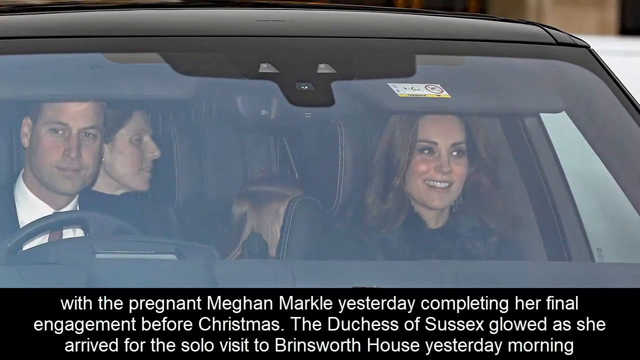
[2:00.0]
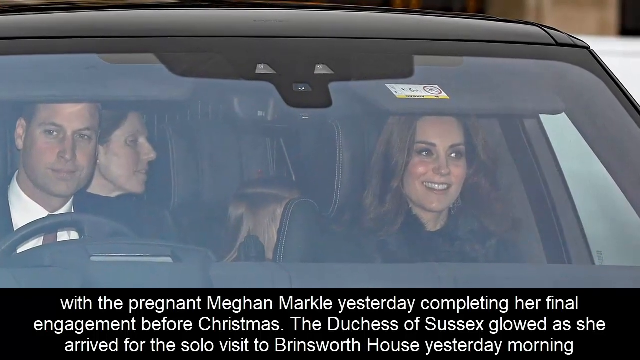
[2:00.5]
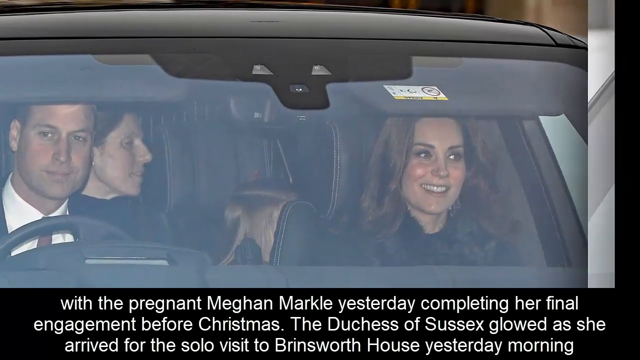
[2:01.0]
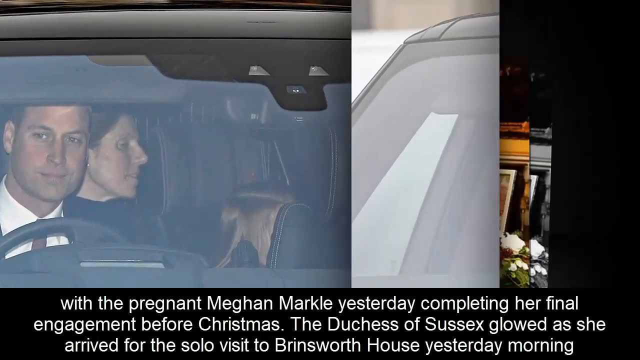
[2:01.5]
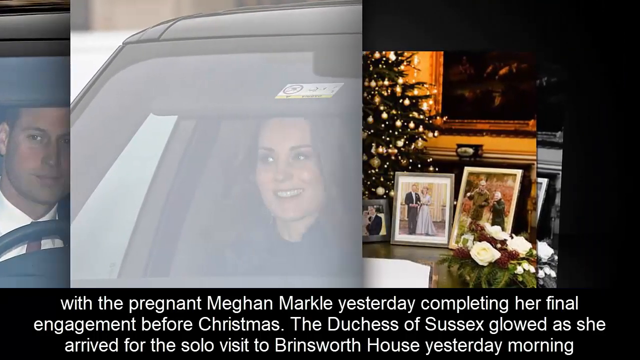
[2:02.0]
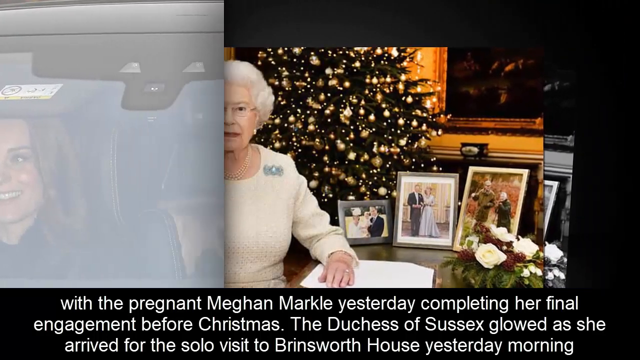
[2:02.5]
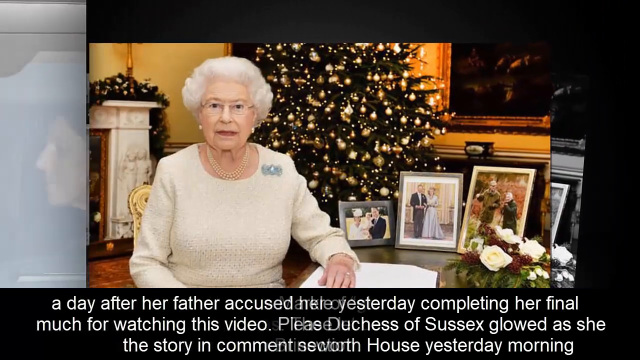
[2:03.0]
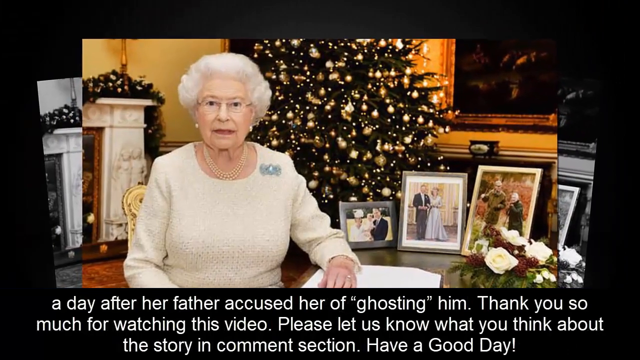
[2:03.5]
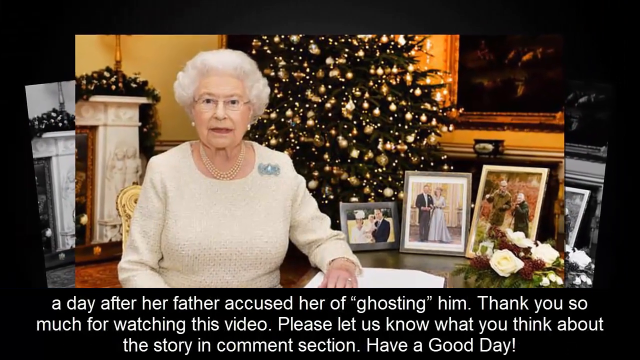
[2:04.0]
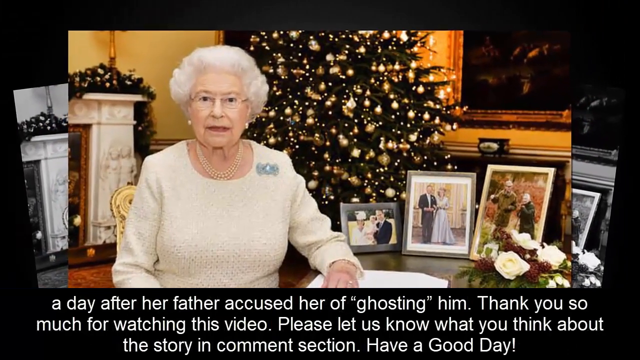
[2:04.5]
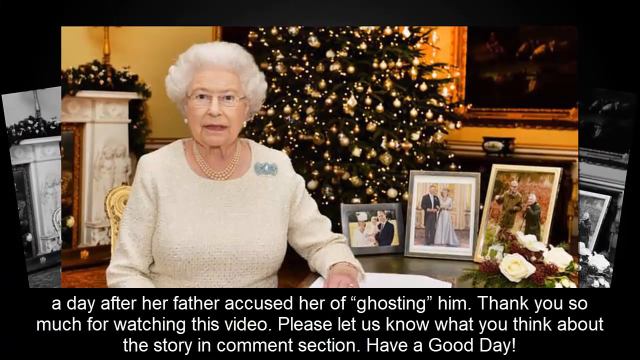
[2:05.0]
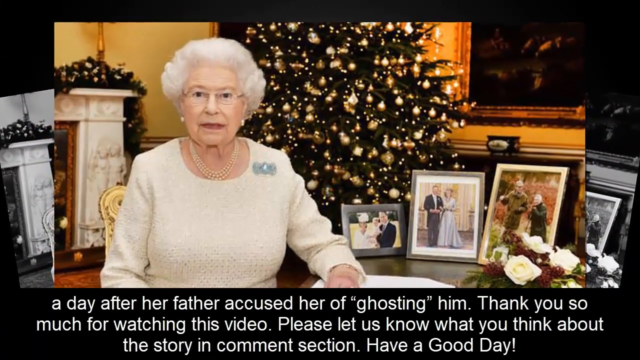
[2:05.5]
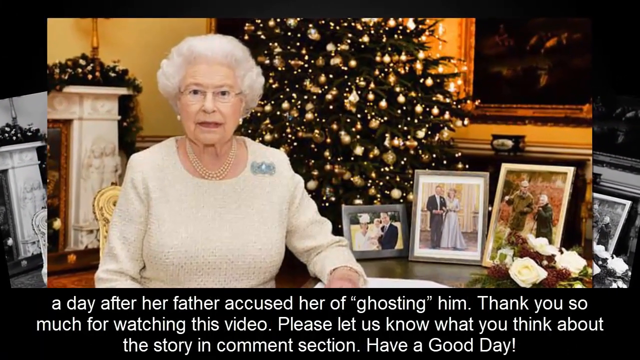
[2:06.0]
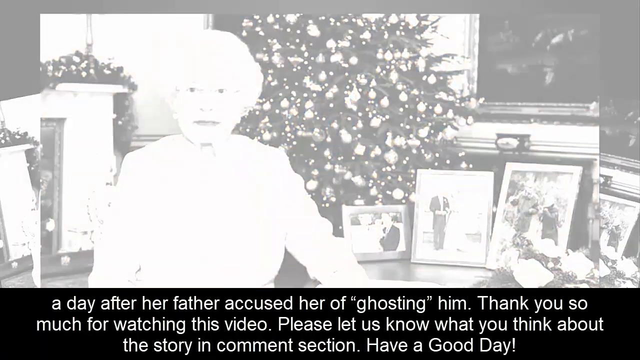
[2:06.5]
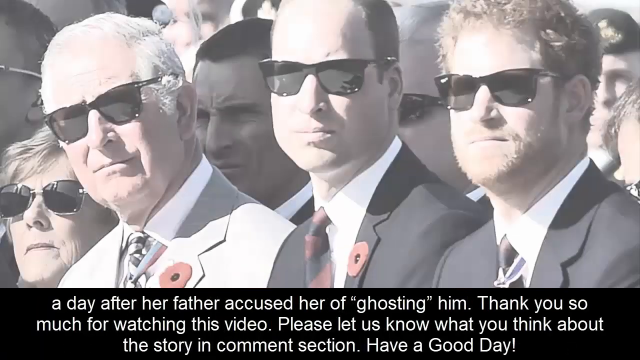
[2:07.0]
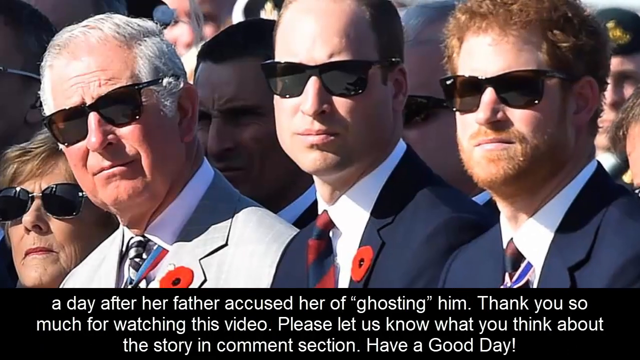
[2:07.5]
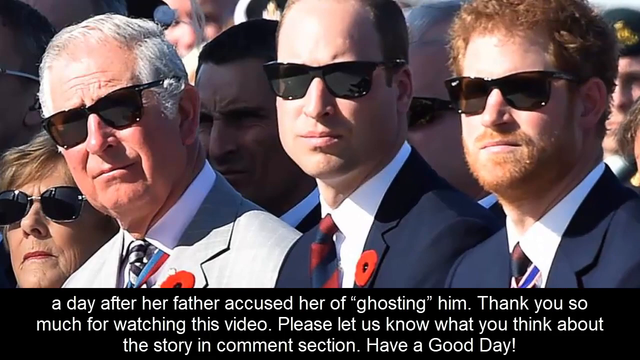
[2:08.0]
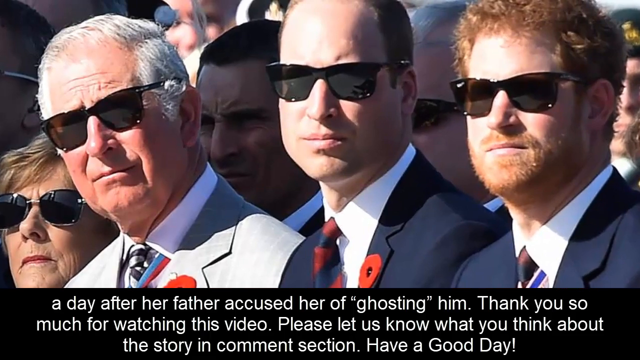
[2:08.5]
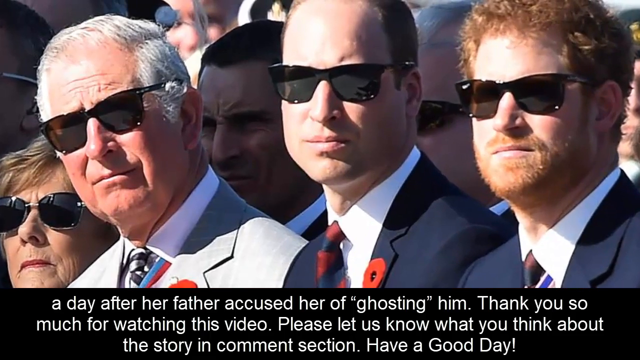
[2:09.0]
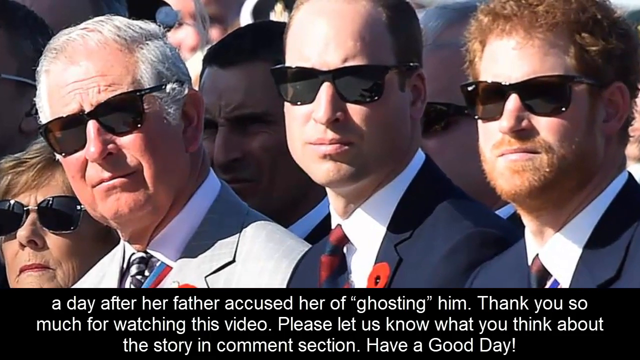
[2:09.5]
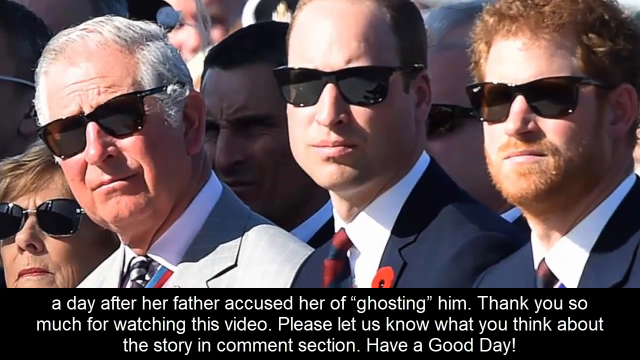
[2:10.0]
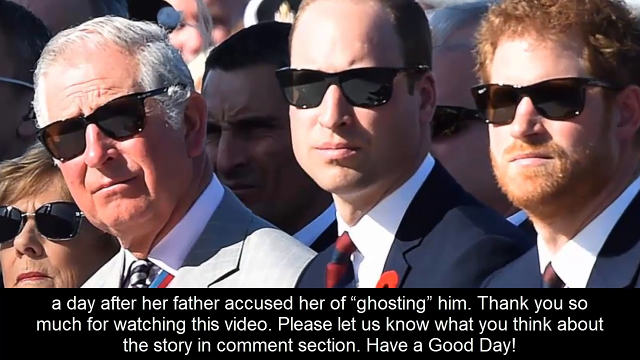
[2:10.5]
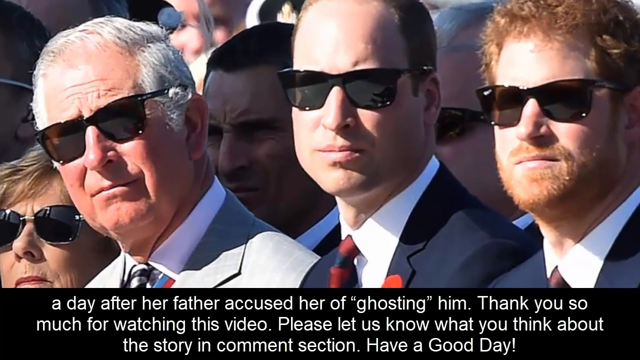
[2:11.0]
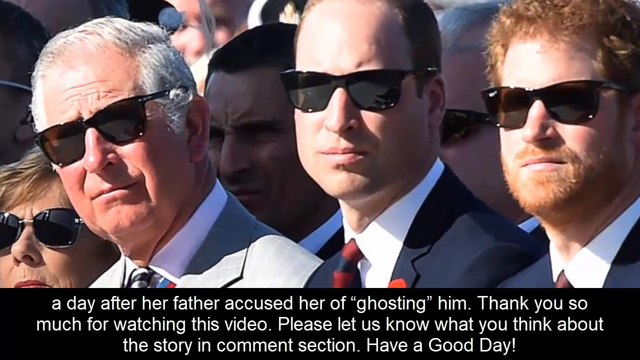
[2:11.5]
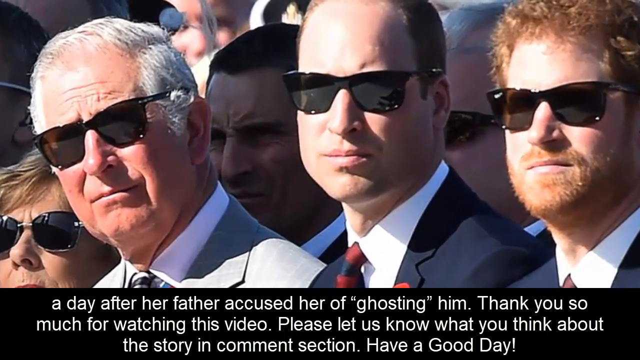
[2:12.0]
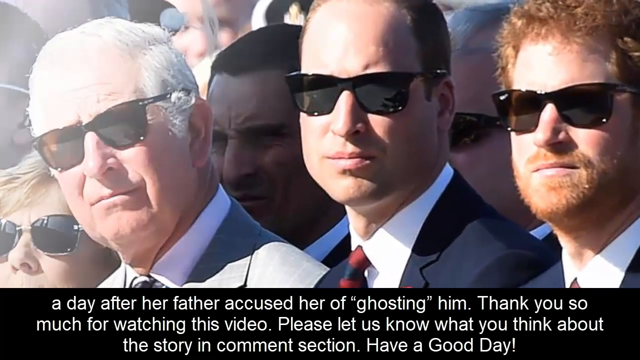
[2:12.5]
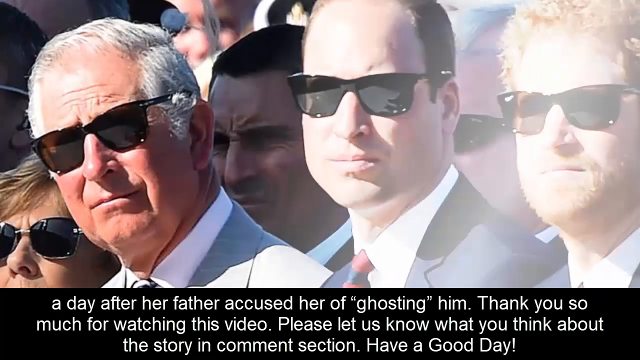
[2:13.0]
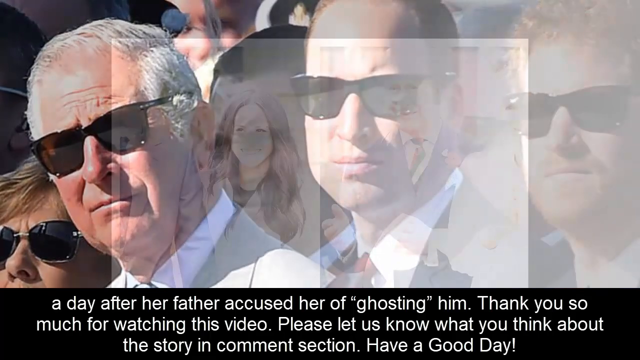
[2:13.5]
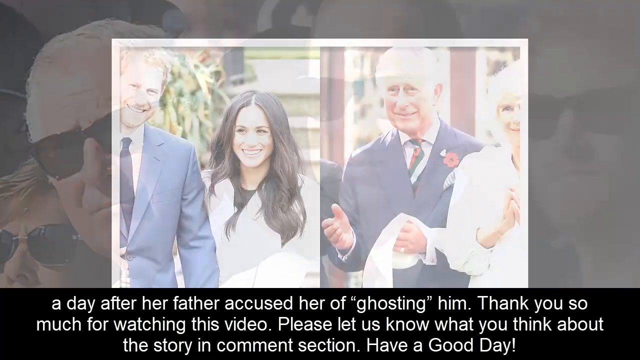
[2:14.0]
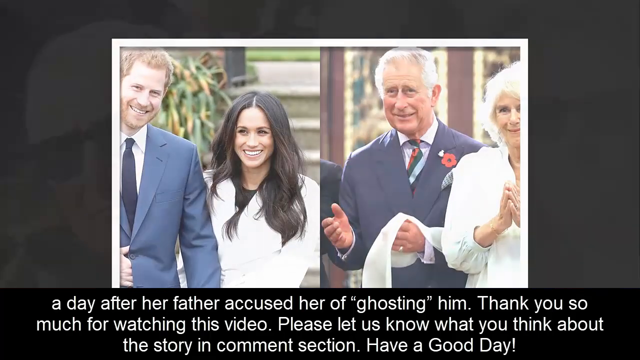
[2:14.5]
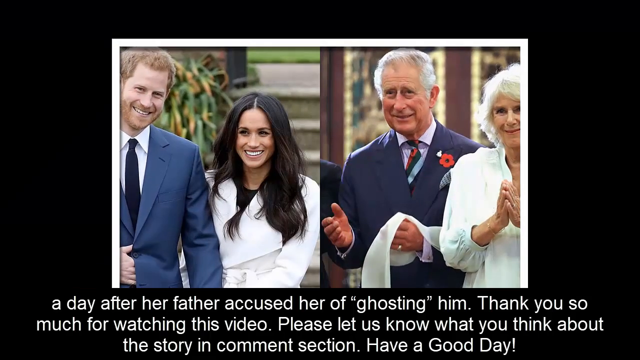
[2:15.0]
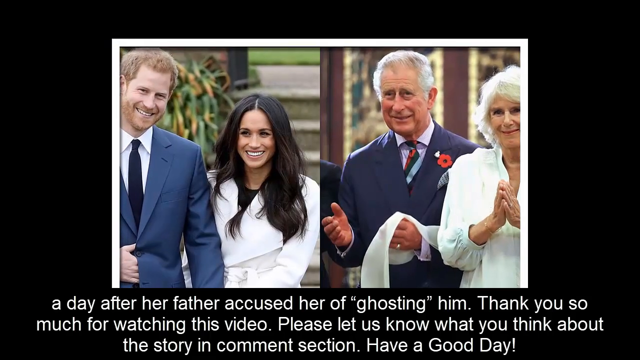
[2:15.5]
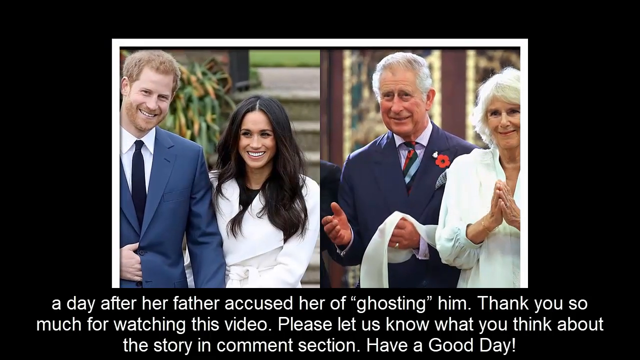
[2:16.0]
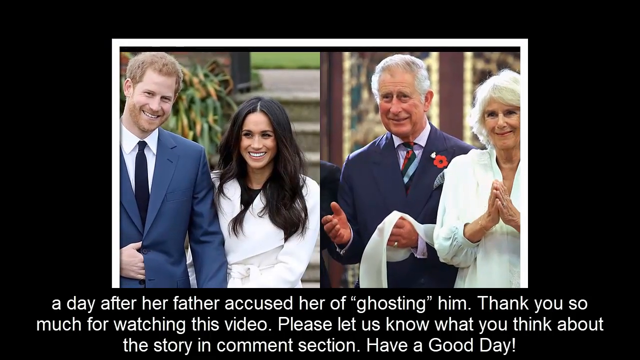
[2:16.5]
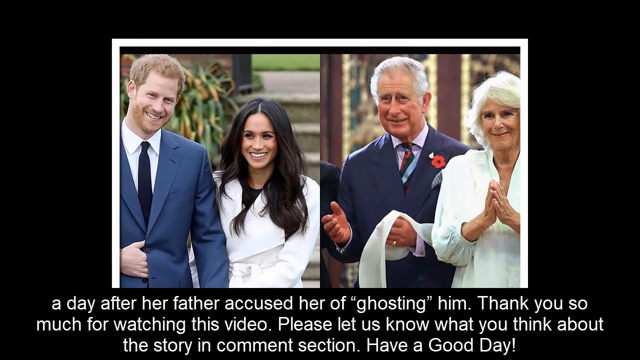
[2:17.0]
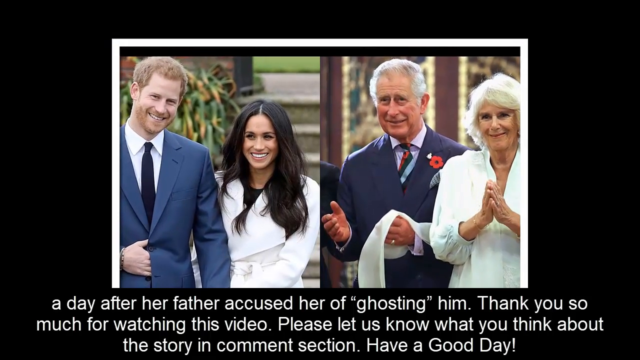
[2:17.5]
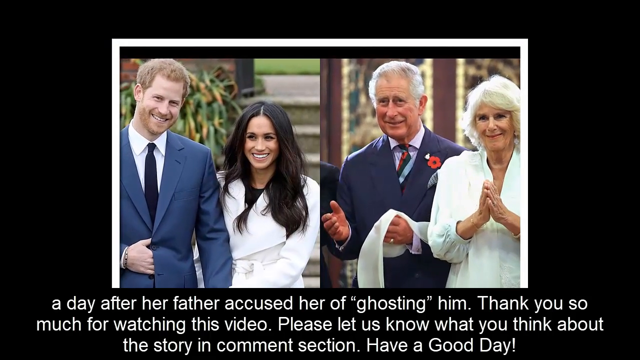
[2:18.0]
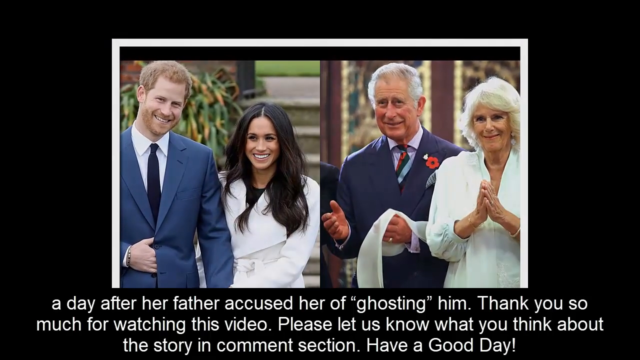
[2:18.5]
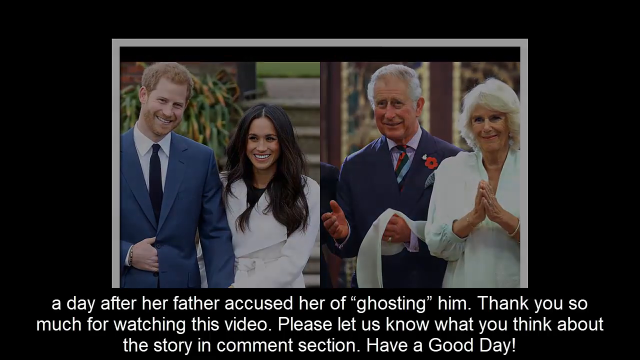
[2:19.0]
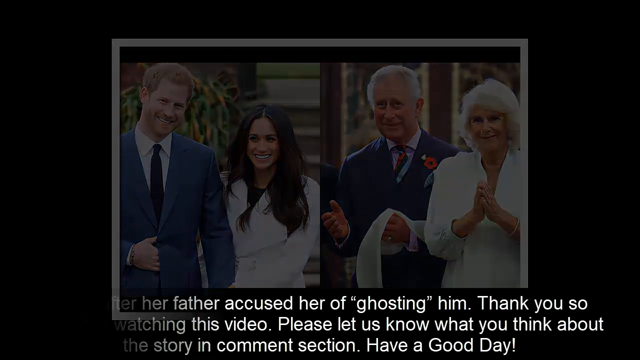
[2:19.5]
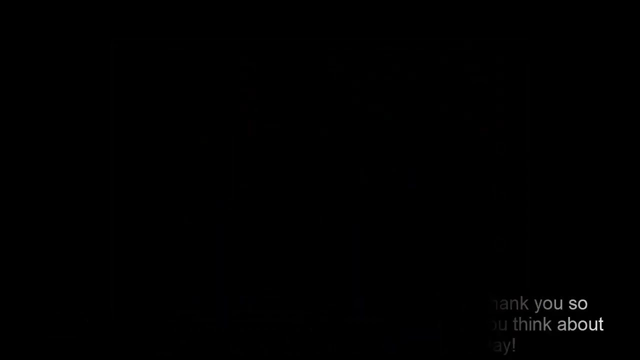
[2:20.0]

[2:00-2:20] What looks like Meghan with her family is shown, with the prince, without a full beard, in the car; the images show one prince with a full beard and one clean-shaven. He wears a red tie, slightly different from his brother's dark one. In the back seat, a woman and a child's head are visible, and this car has black leather seat covers. The camera pans to the left and slides into an image of Queen Elizabeth in front of a Christmas tree, with images of her family in front of the tree. A paparazzi shot of Prince Philip and the two princesses follows, zooming slightly into the face, and then another shot shows Prince Philip with Queen Elizabeth and Prince Henry with Meghan.